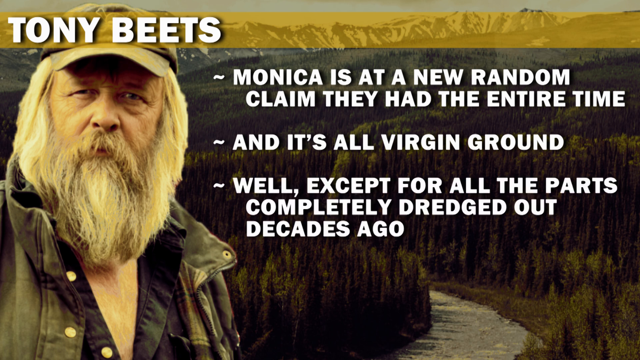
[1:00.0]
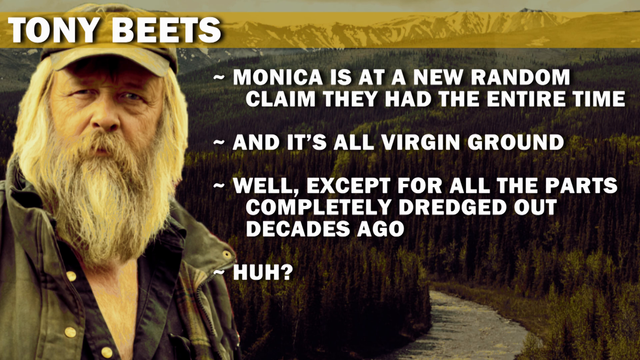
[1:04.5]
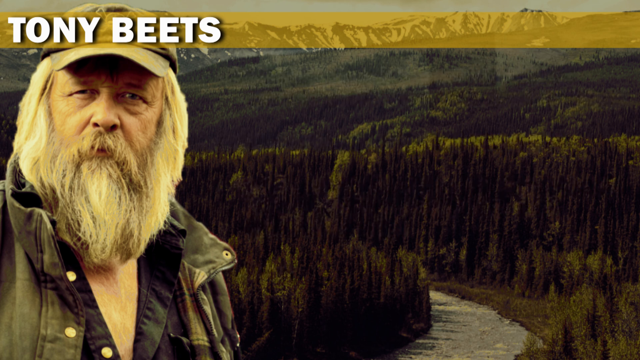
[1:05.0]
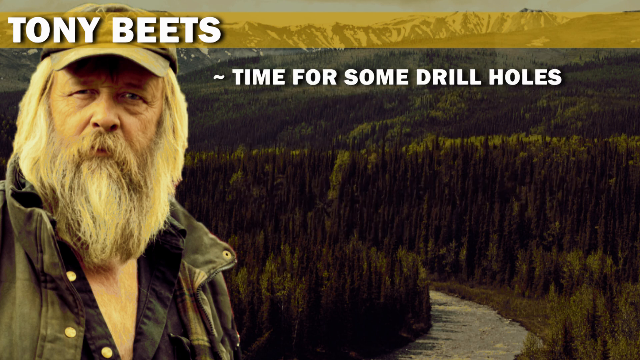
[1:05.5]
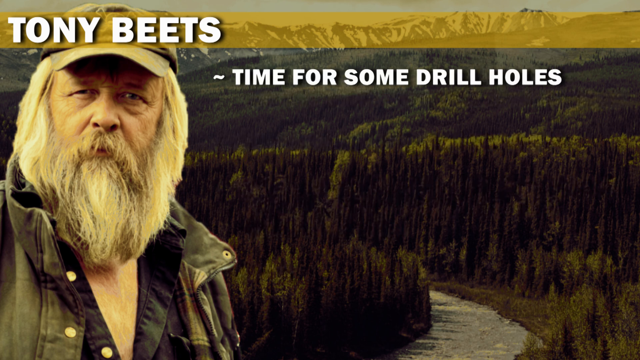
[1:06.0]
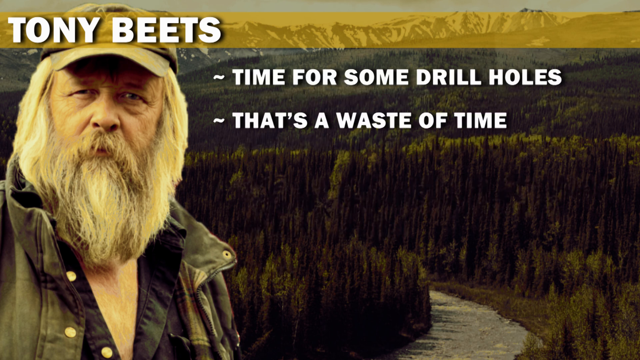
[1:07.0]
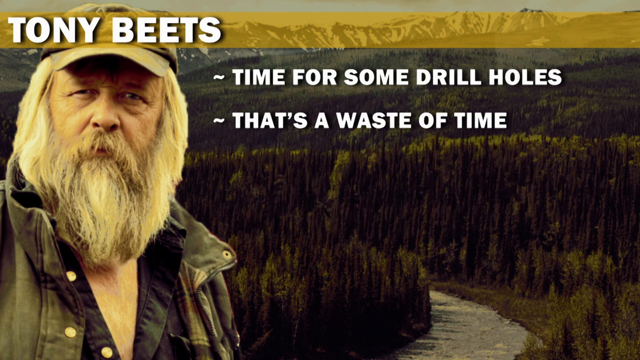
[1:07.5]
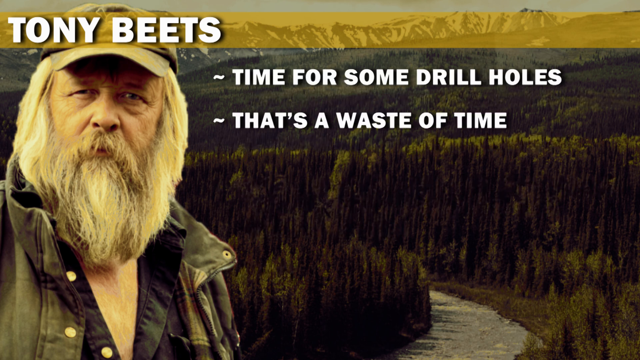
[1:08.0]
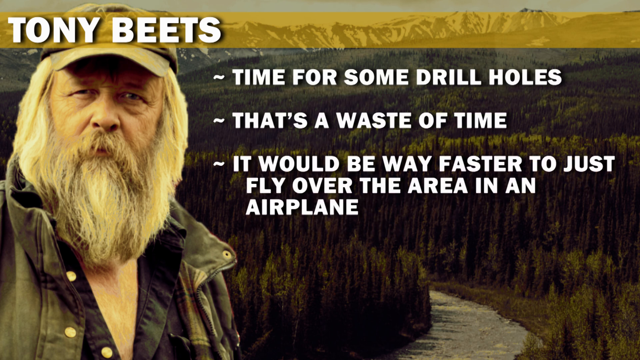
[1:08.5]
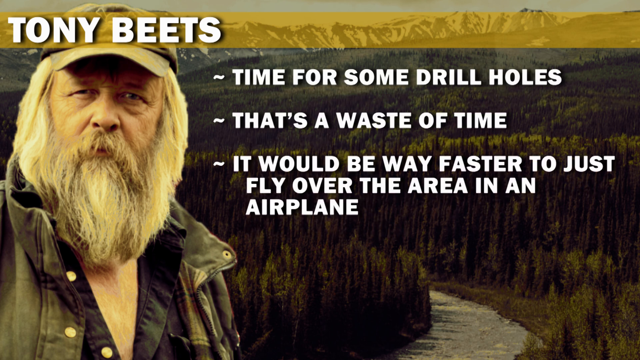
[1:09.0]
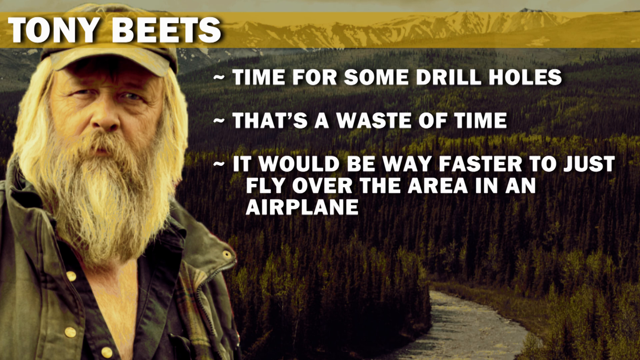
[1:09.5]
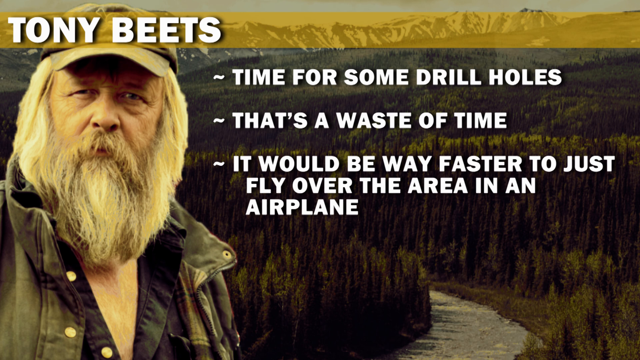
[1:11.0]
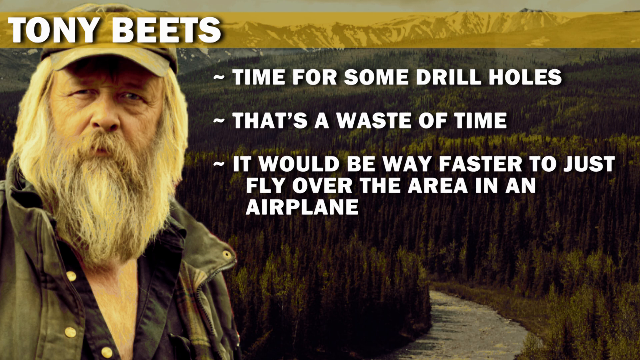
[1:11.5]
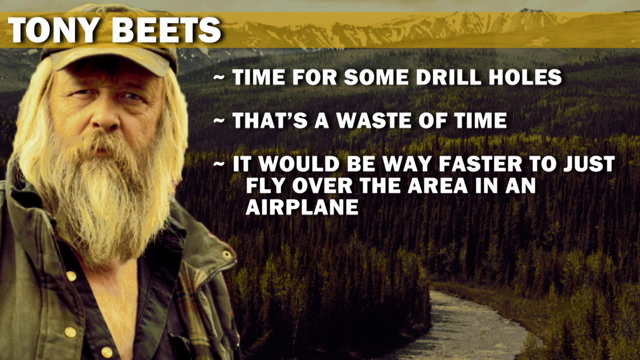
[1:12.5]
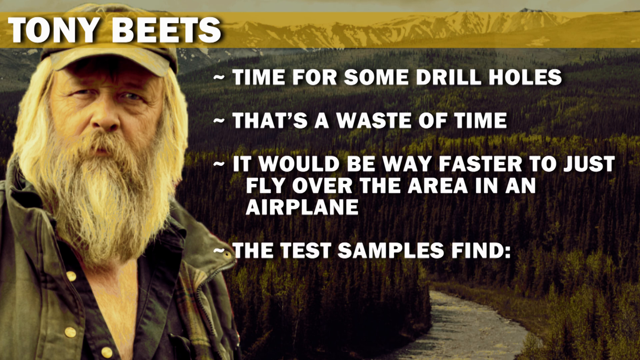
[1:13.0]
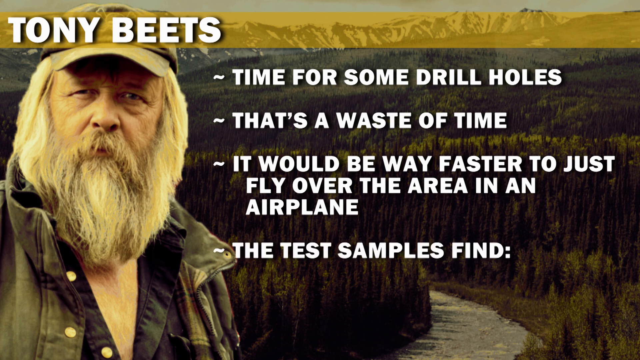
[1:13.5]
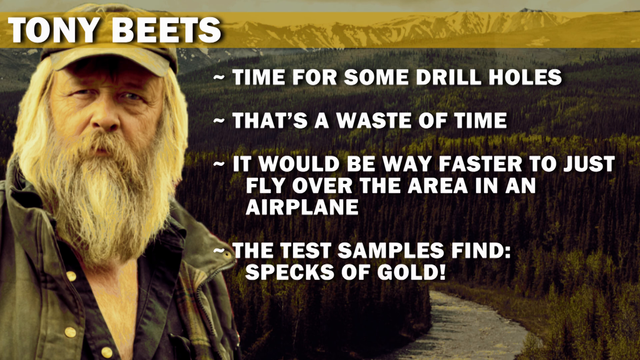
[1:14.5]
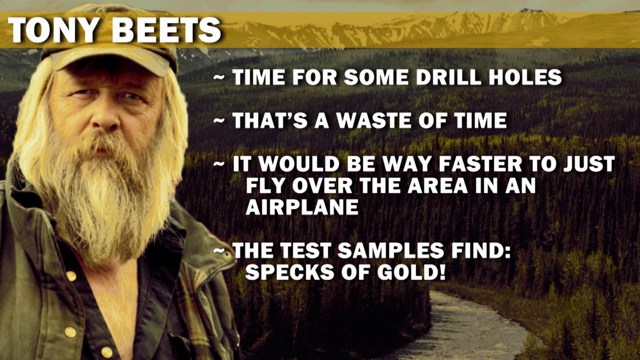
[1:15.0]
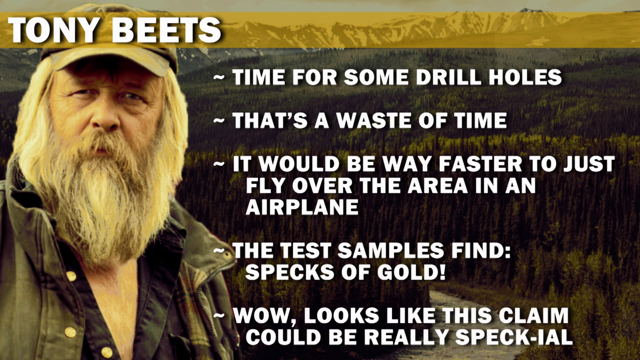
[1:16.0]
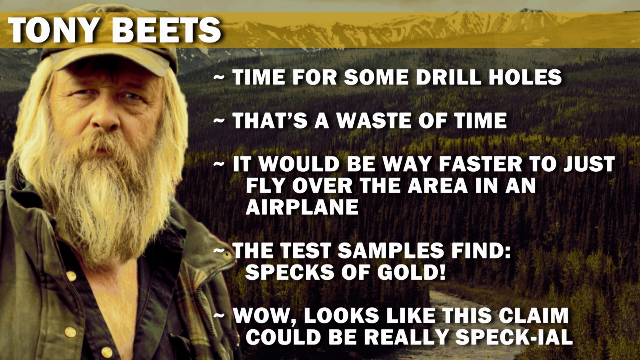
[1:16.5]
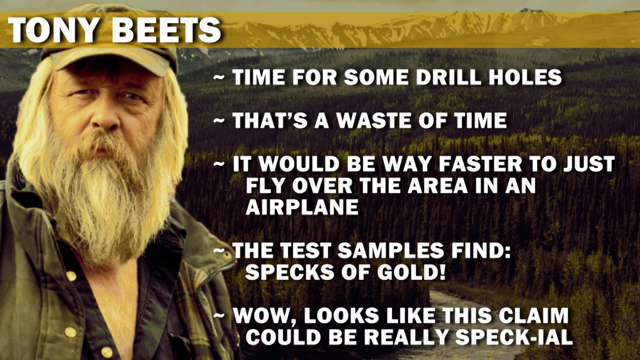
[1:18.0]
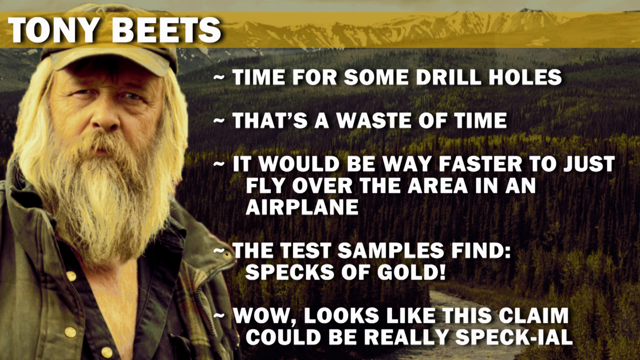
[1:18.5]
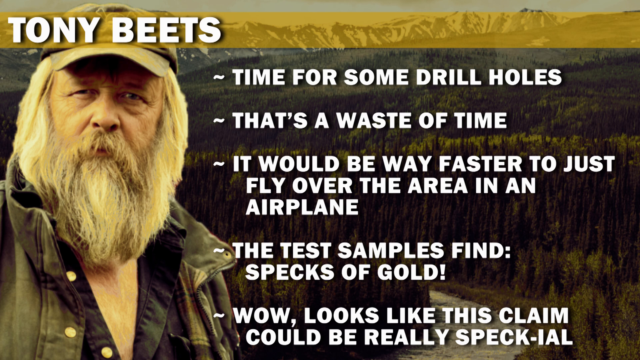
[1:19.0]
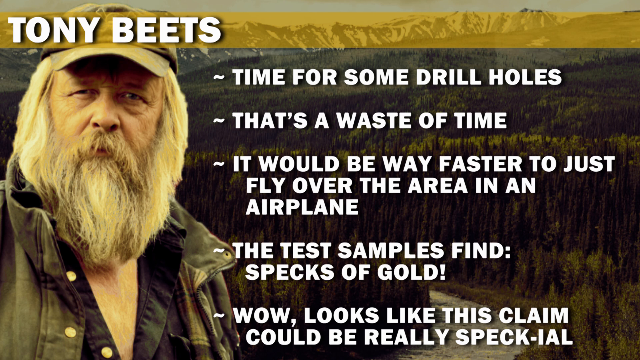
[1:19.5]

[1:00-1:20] The slide has a background image of a vast forest with snowy mountains. On top of it, on the left-hand side, is the name "Tony Beets" in a white capital-letter font, with a picture of Tony from the chest up underneath. On the right-hand side are three bullet points reading "Monica is at a new random claim they had the entire time.", "and it's all virgin ground." and "well, except for all the parts completely dredged out decades ago." A fourth bullet point appears that just reads "ha". All of that text disappears. A new bullet point appears reading "time for some drill holes.", followed by "that's a waste of time.", then "it would be way faster to just fly over the area in an airplane.", and then "the test samples find", with a gold exclamation mark underneath. The next bullet point reads "wow, looks like this claim could be really speck-tial."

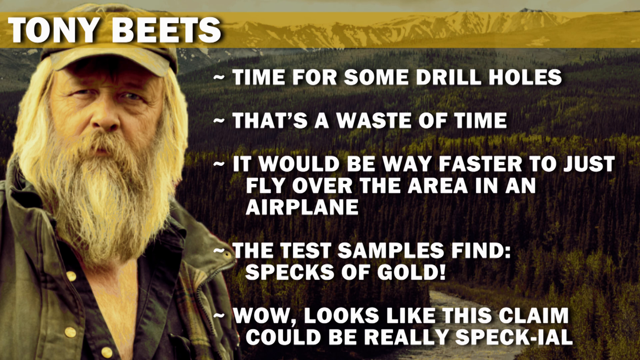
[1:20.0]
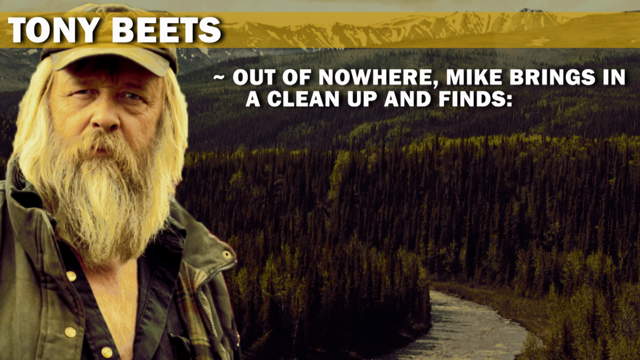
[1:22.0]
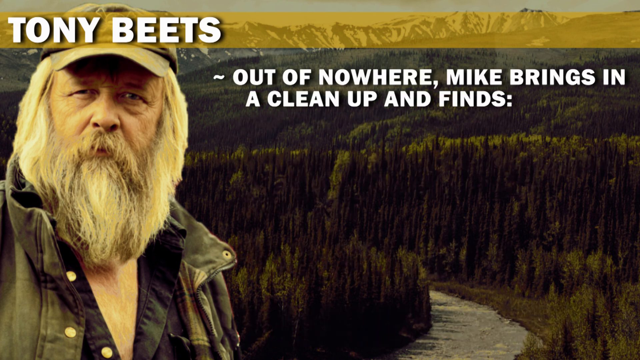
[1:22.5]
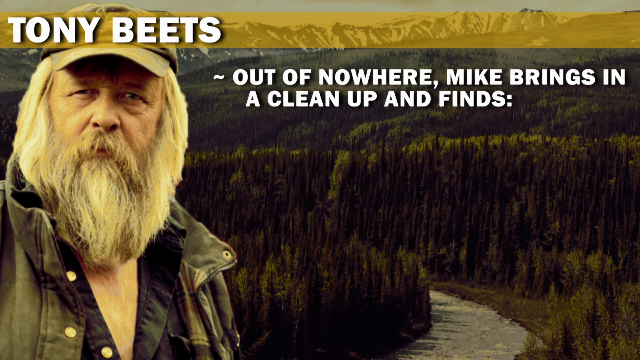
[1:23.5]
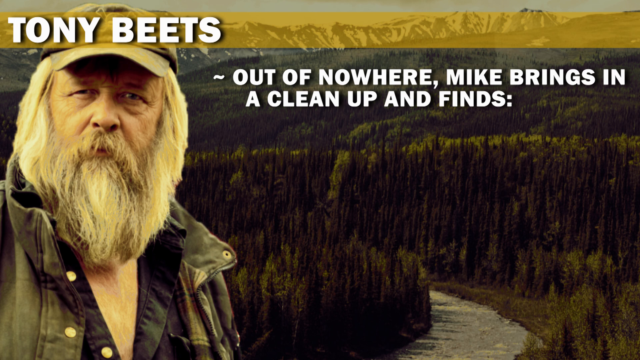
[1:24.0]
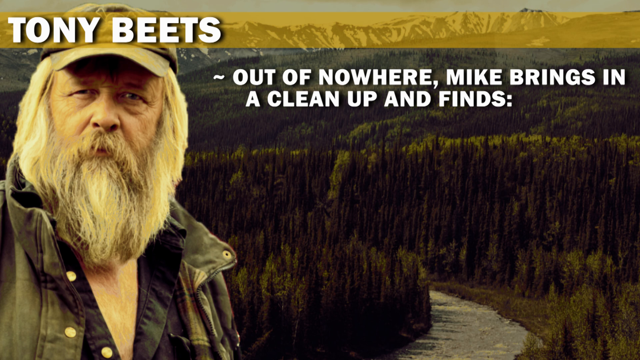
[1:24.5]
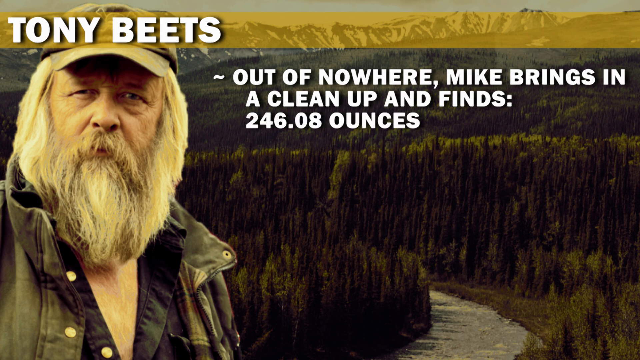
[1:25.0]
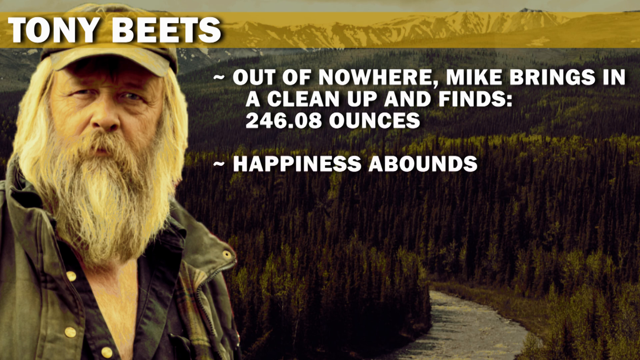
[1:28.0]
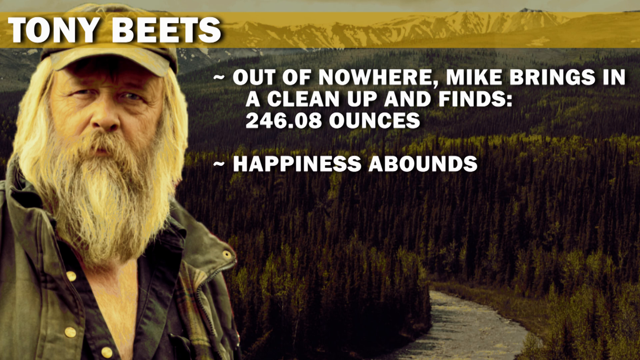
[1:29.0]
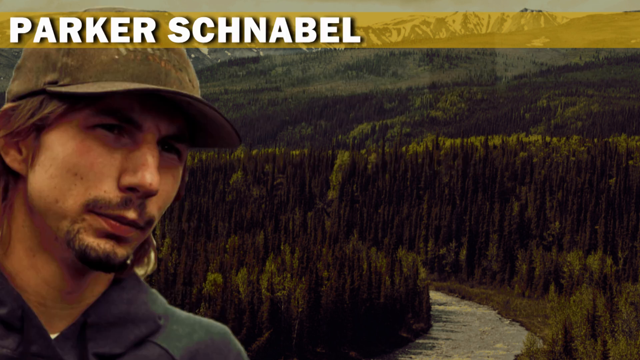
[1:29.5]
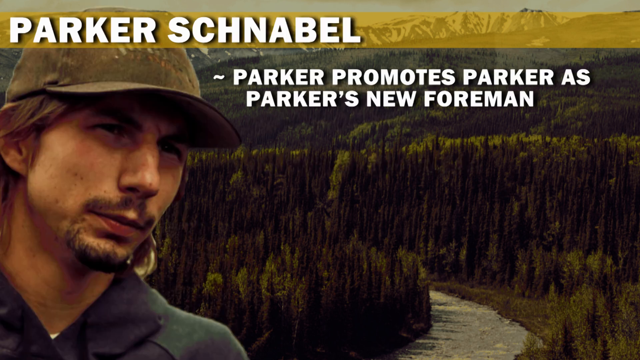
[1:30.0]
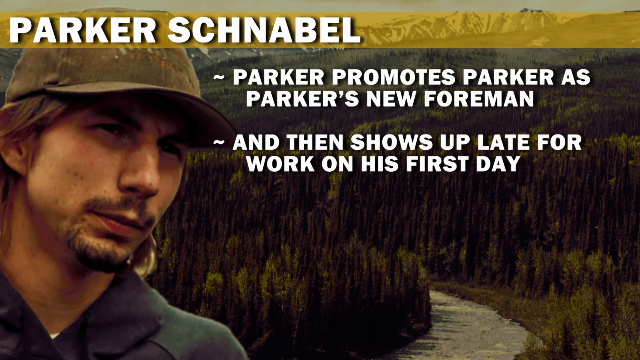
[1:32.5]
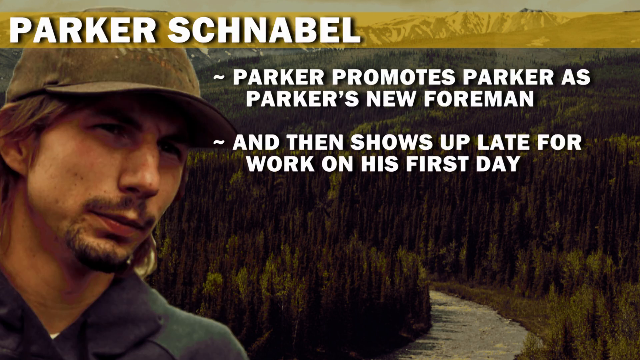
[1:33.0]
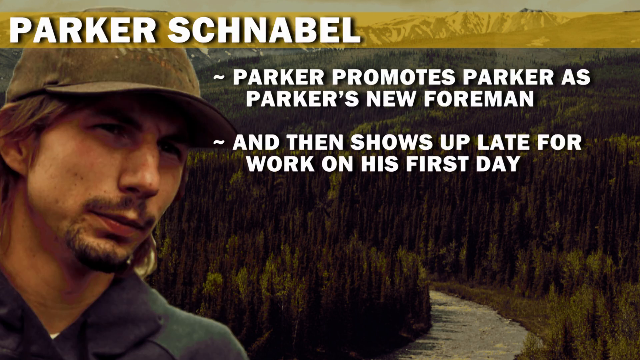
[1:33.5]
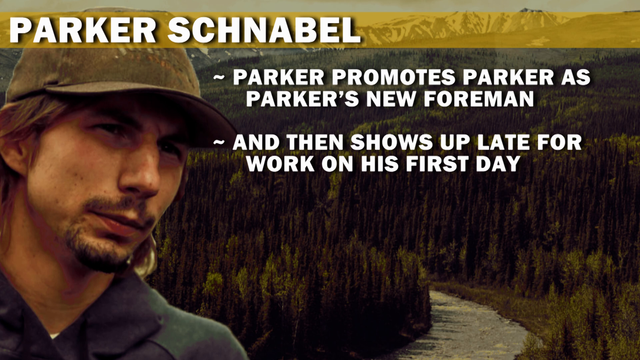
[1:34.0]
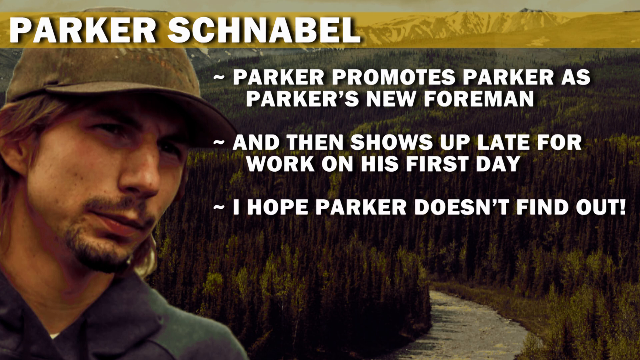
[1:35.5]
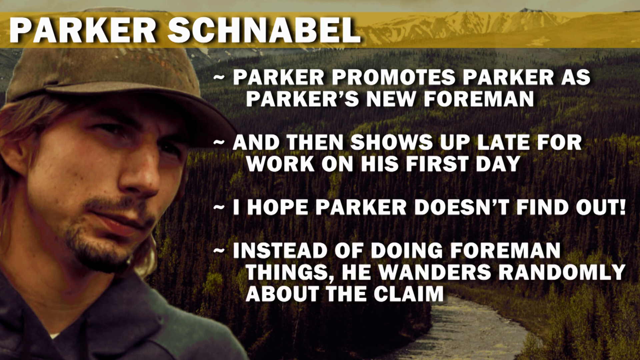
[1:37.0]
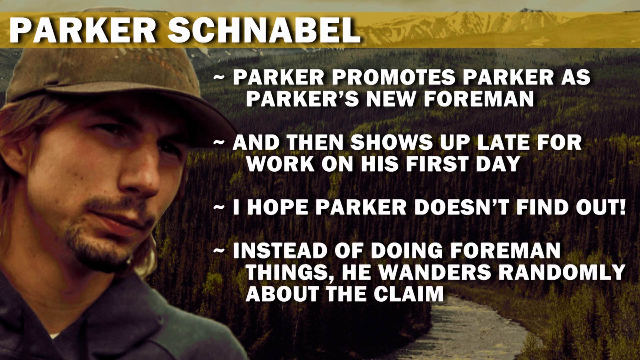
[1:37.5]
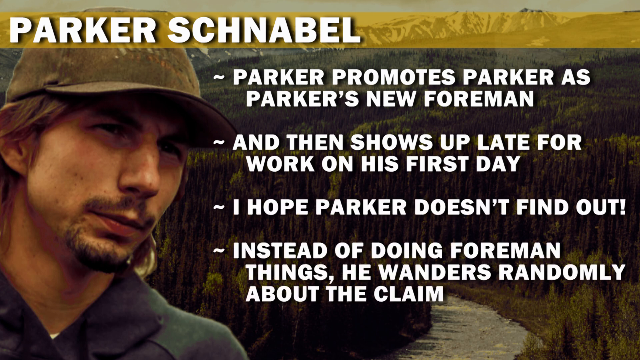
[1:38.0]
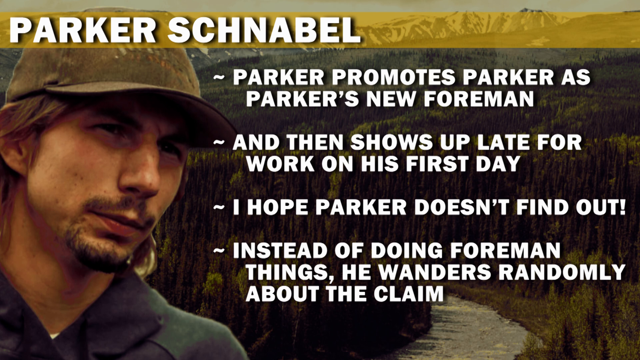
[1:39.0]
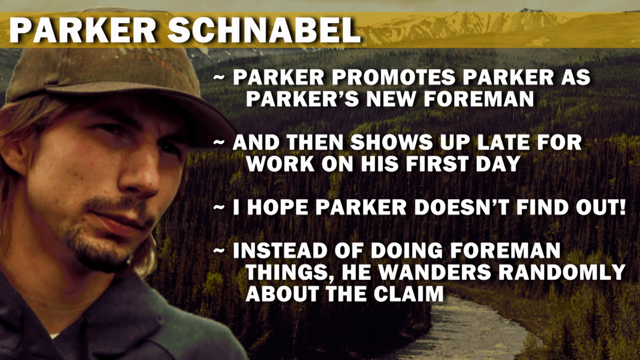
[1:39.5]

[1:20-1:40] The slide's background is a forest image with snowy mountains. At the top of the left-hand side, text reads "Tony Beets", and underneath is a kind of head-and-shoulders photo of Tony Beets with a big white beard, a dark green cap, a matching coloured coat and a black shirt. On the right-hand side are five bullet points: "time for some drill holes.", "that's a waste of time.", "it would be way faster to just fly over the area in an aeroplane.", "the test samples find specks of gold." and "wow, looks like this claim could be really speck-tial." All of those bullet points disappear and a new one appears reading "out of nowhere Mike brings in a clean up and finds 246.08 ounces." The next bullet point reads "happiness abounds." Then the third man appears: the name on the left-hand side changes to "Parker Schnabel", with a head-and-shoulders image of Parker wearing a dark green cap, with a small dark moustache and beard, looking very pensive. On the right-hand side, bullet points read "Parker promotes Parker as Parker's new foreman.", "and then shows up late for work on his first day.", "I hope Parker doesn't find out." and "instead of doing foreman things he wonders randomly about the claim."